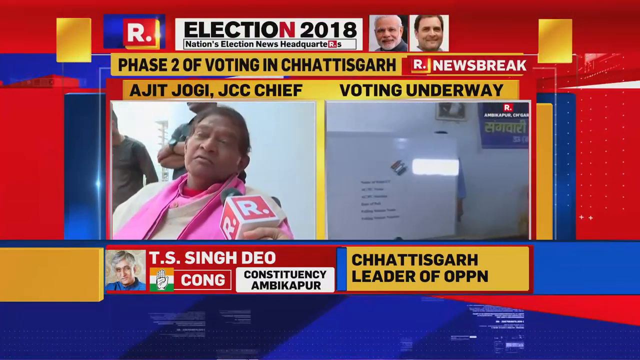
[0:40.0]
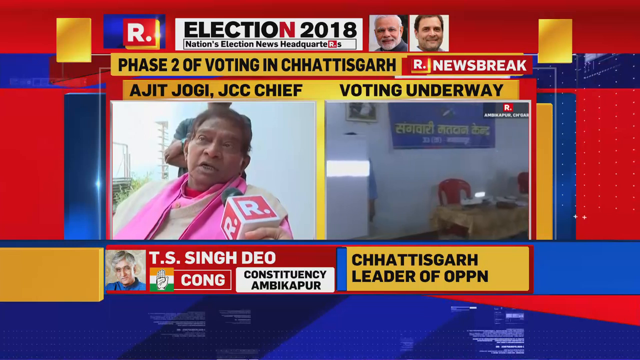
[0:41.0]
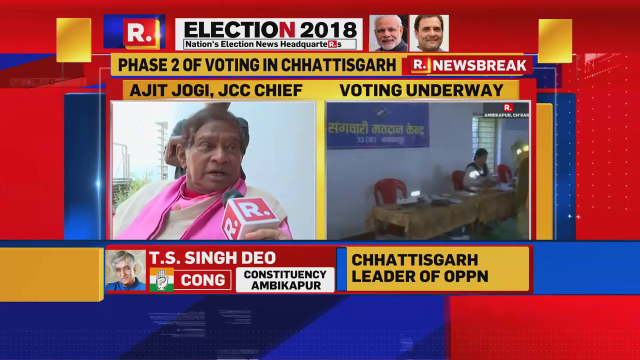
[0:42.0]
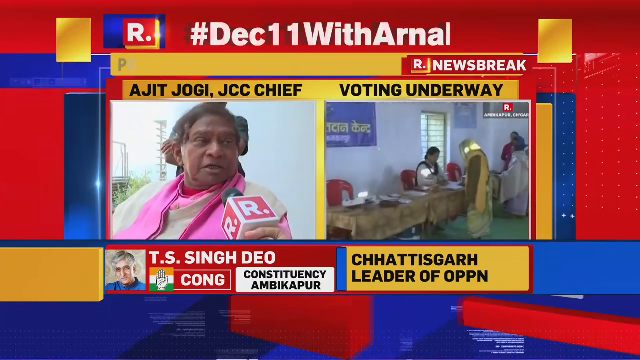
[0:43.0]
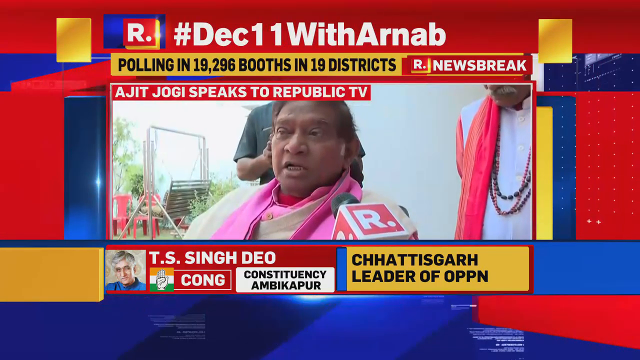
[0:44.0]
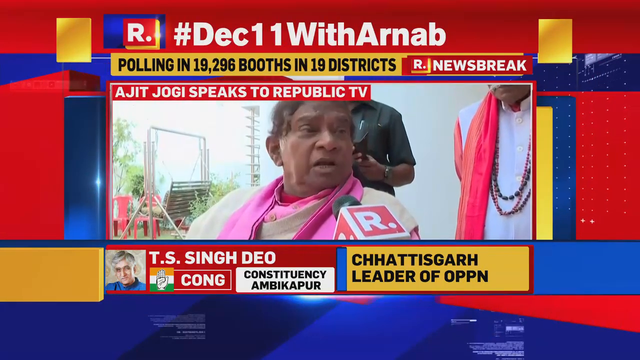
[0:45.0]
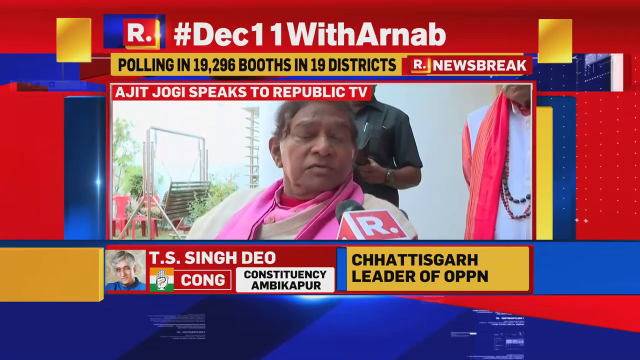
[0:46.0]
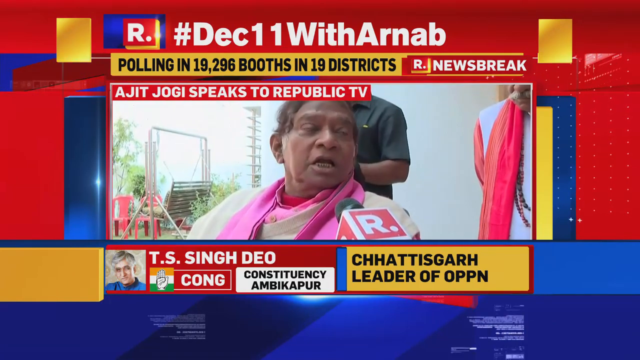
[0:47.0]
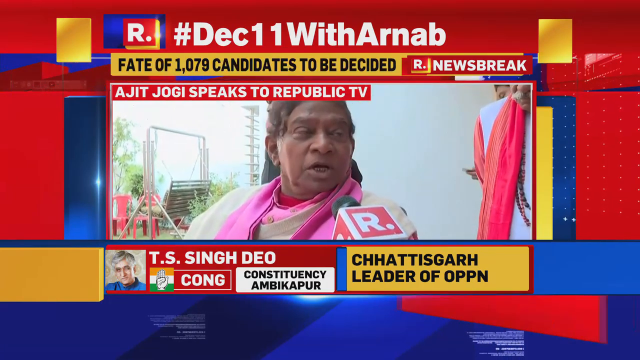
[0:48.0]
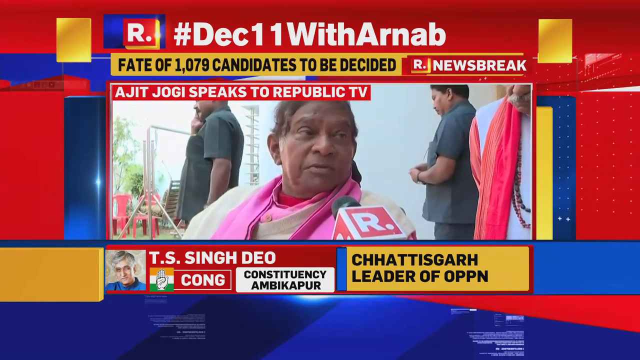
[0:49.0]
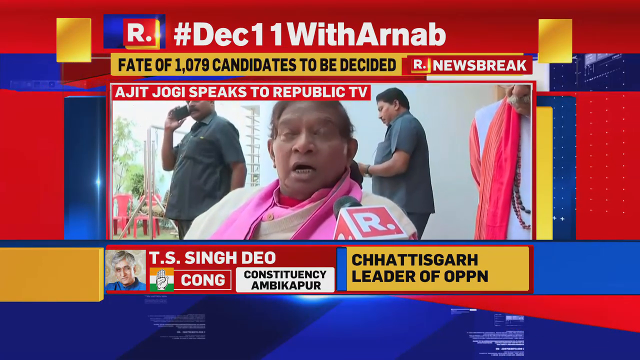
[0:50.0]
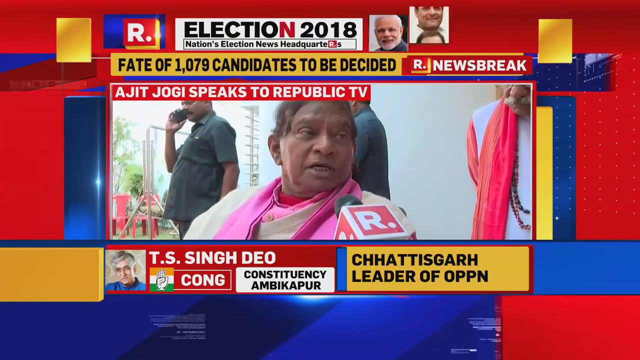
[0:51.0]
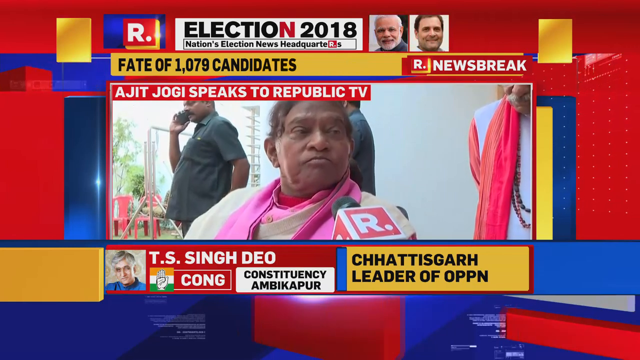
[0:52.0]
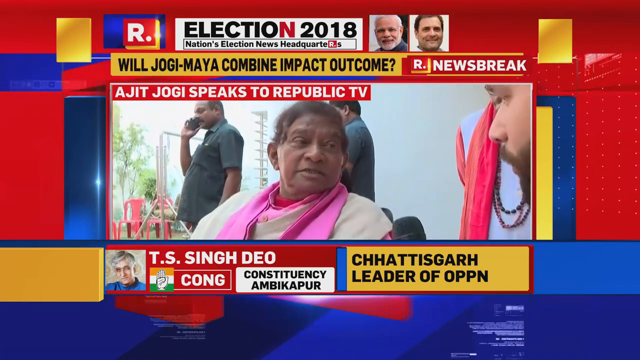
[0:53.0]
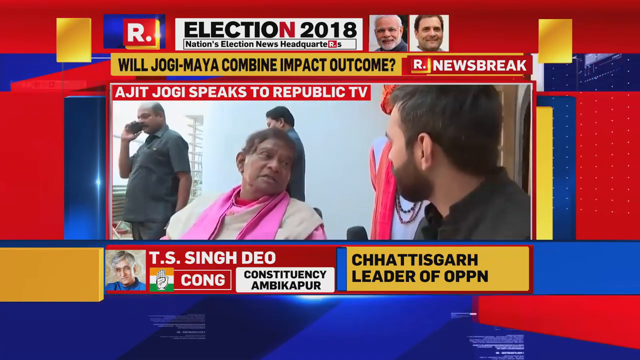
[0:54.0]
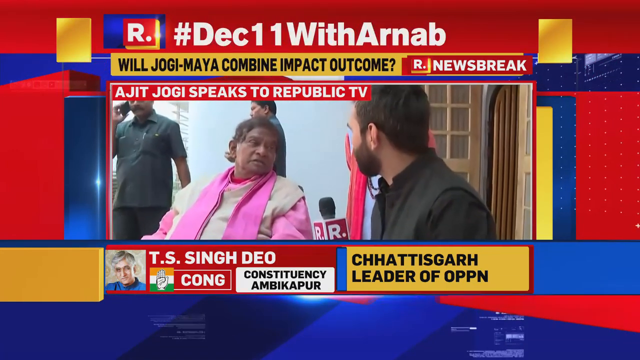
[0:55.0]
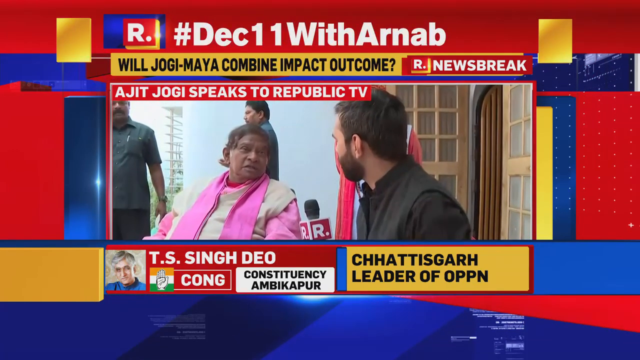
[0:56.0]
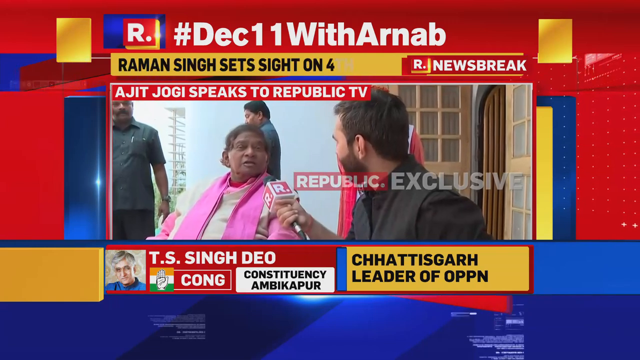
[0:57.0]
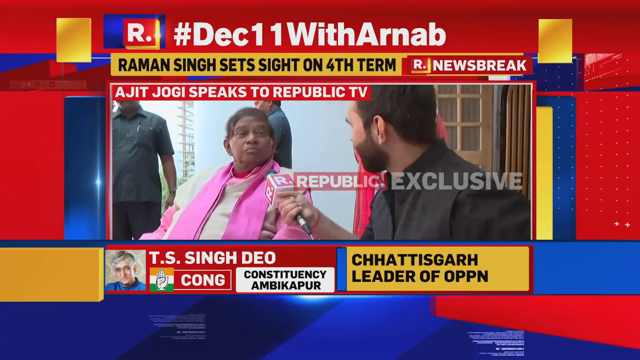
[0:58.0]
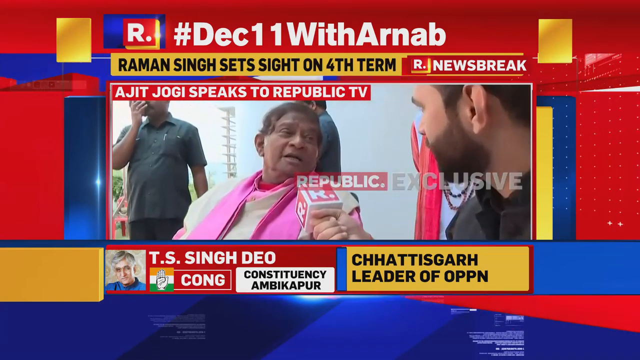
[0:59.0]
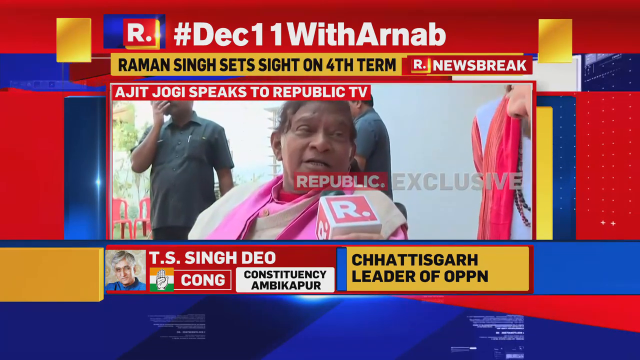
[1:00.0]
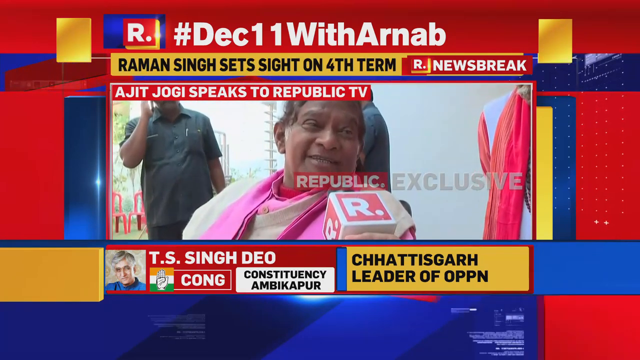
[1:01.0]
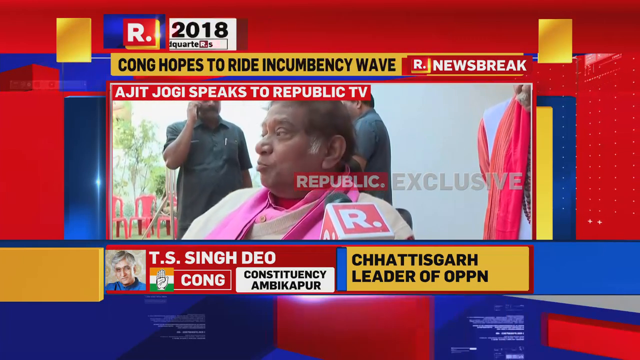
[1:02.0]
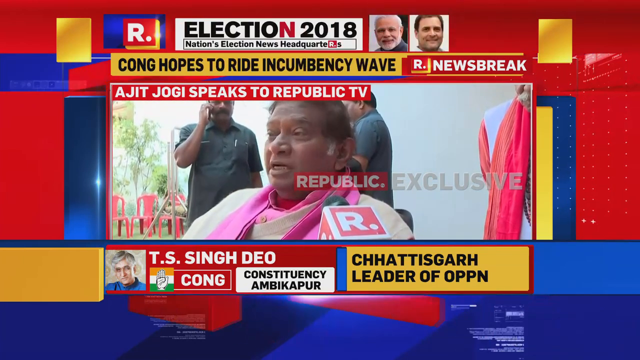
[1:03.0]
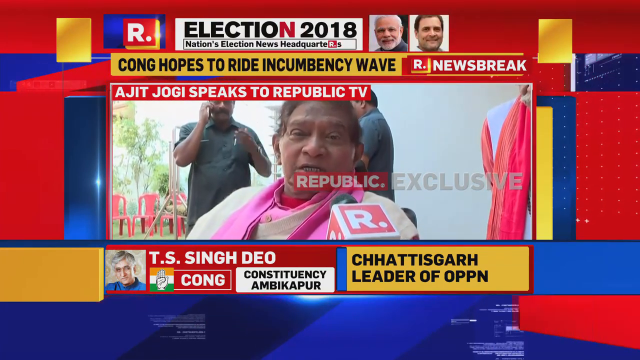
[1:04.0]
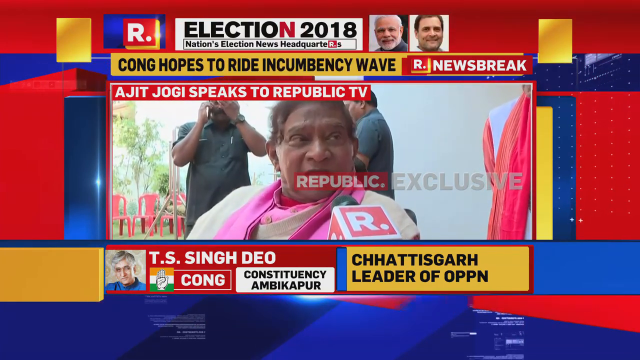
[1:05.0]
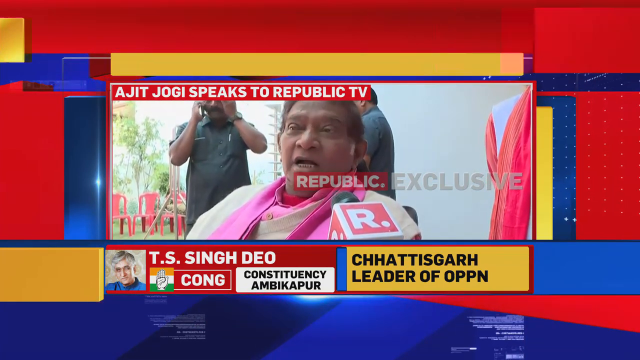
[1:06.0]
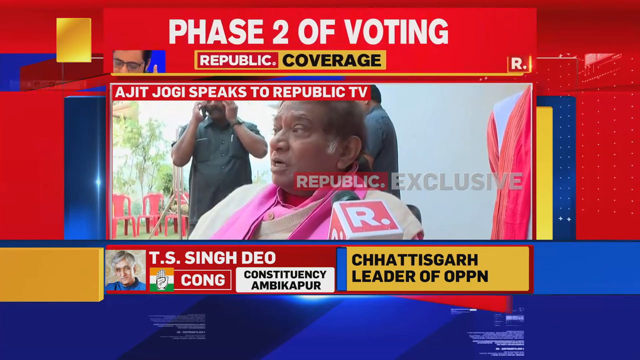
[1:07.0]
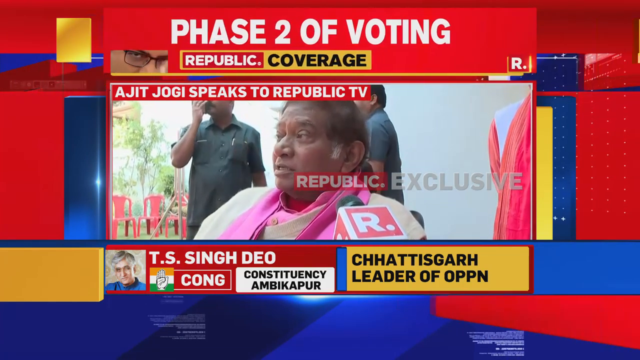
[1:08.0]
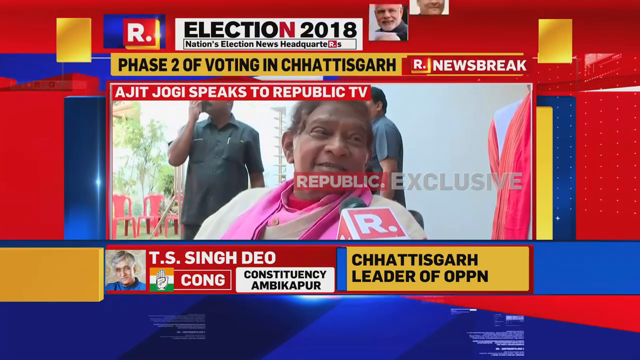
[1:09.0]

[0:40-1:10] The busy graphic continues with the woman being interviewed, and mostly the yellow text box at the top changes. It reads "polling in 19,296 booths in 19 districts", then changes to "fate of 1,079 candidates to be decided", then "will Jogi Maya combine impact outcome?", then "Ramon Singh sets sight on fourth term", and then "Kong hopes to ride incumbency wave". A red text box then comes over the whole top part, reading "PHASE TWO OF VOTING" in white all caps; underneath, a red text box says "Republic" in white, and a yellow text box to its right says "coverage" in black text. The video then switches back to the regular election 2018 graphic with the yellow box underneath it. The changing headlines are the biggest change in this part.